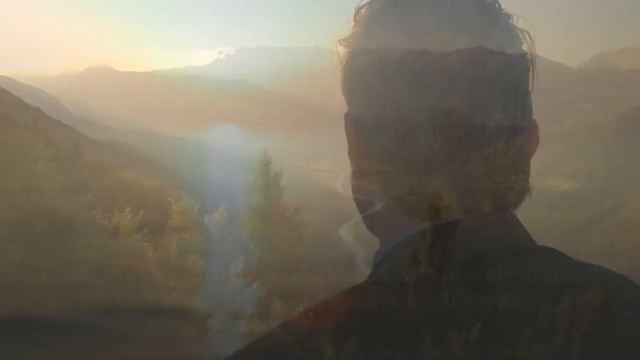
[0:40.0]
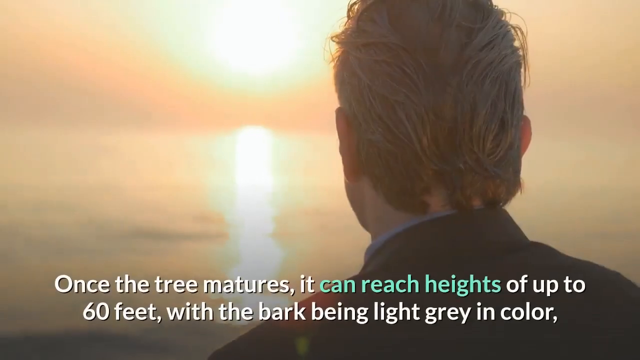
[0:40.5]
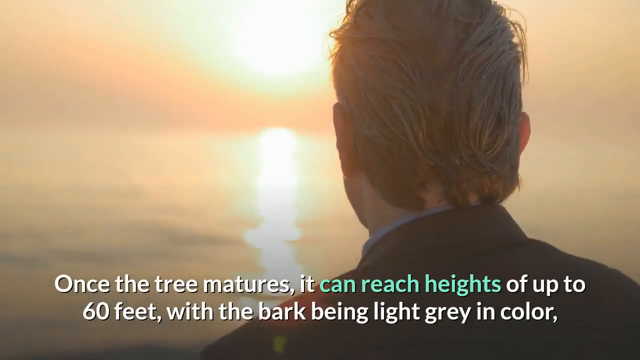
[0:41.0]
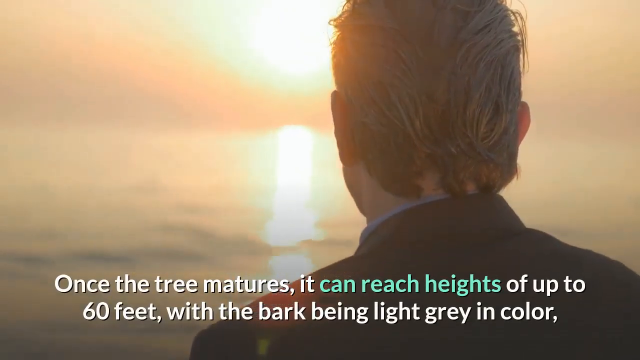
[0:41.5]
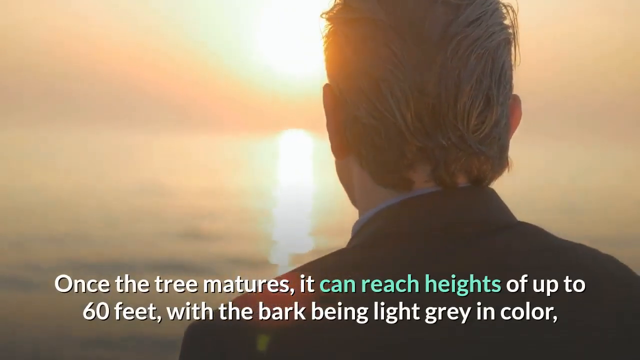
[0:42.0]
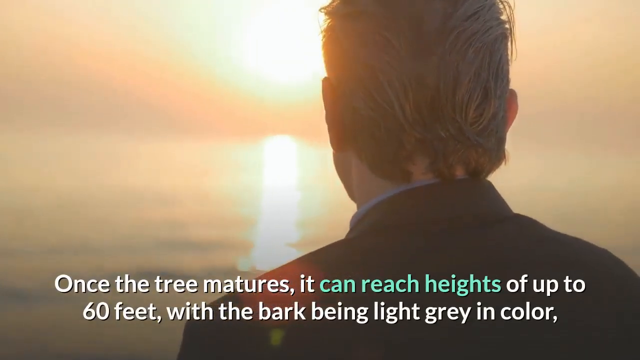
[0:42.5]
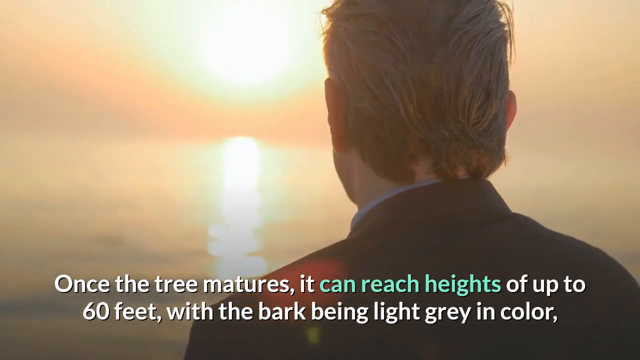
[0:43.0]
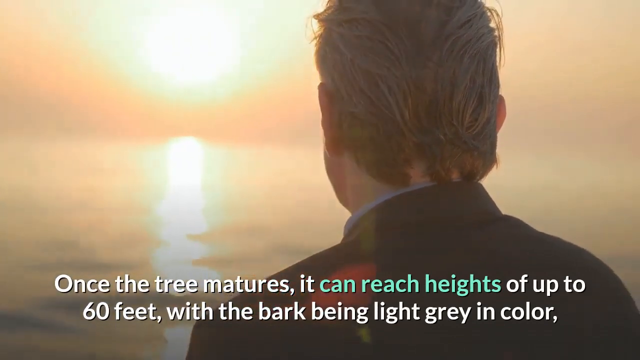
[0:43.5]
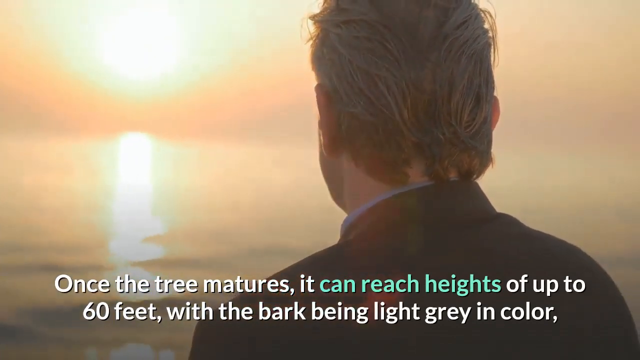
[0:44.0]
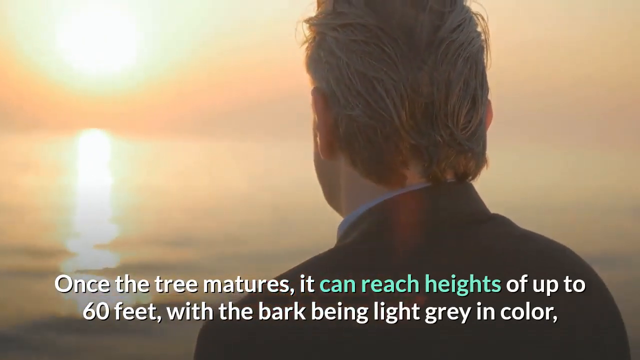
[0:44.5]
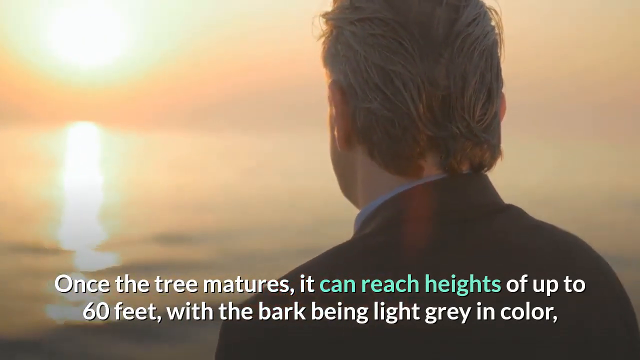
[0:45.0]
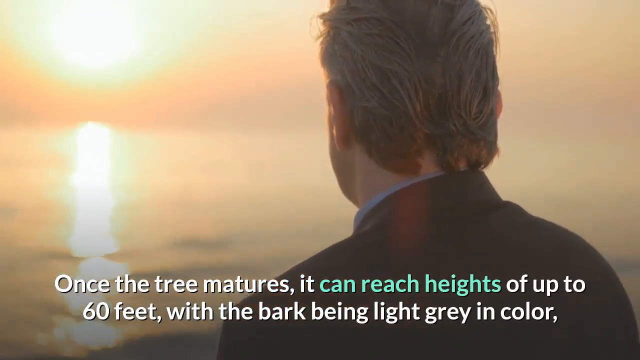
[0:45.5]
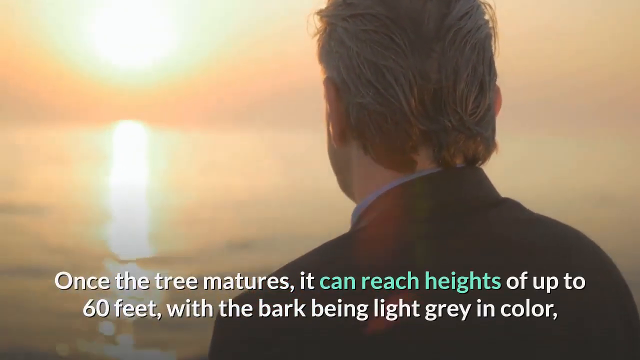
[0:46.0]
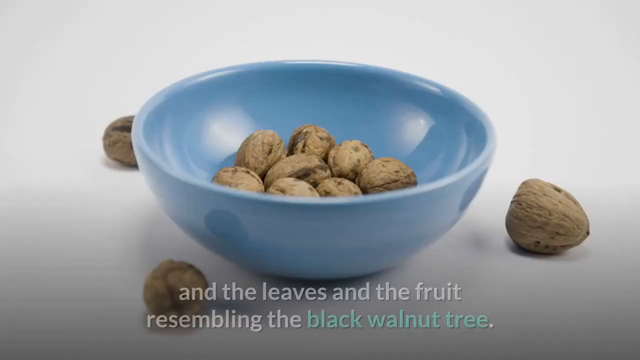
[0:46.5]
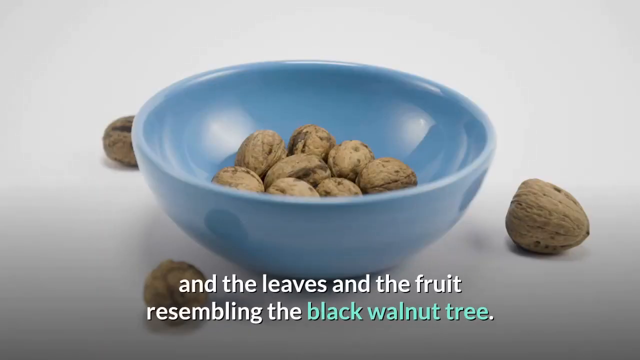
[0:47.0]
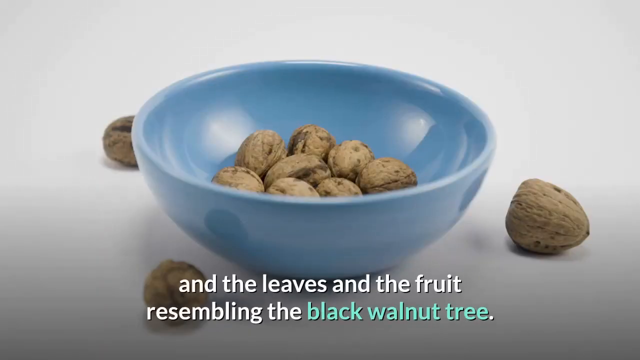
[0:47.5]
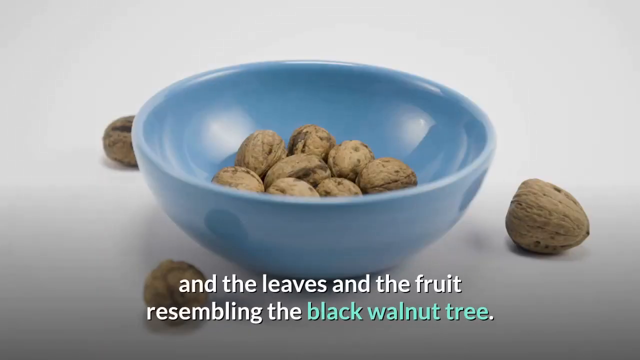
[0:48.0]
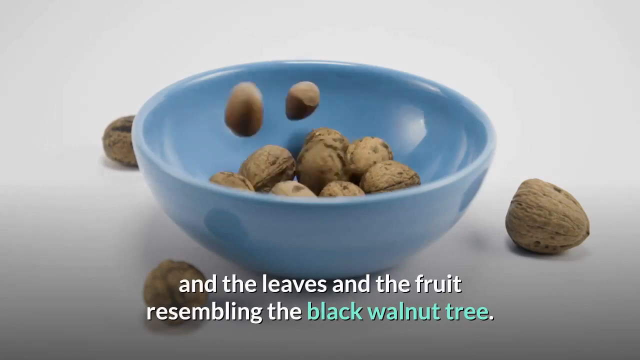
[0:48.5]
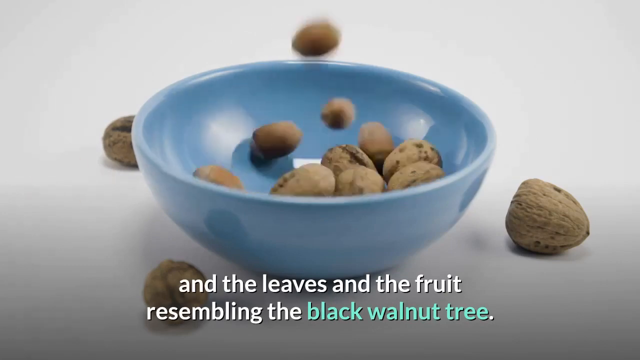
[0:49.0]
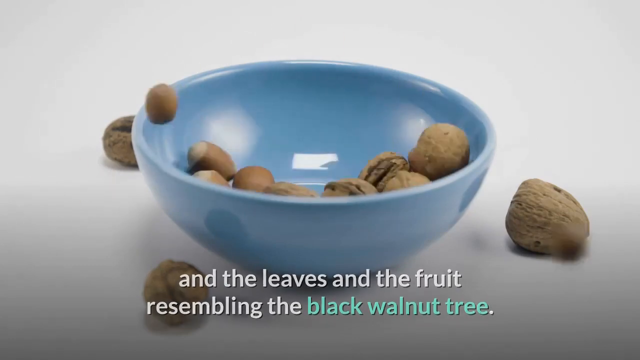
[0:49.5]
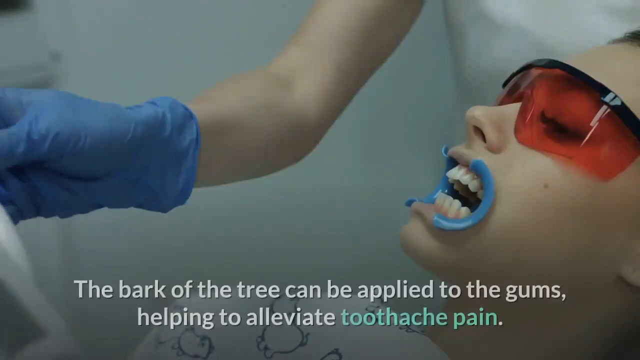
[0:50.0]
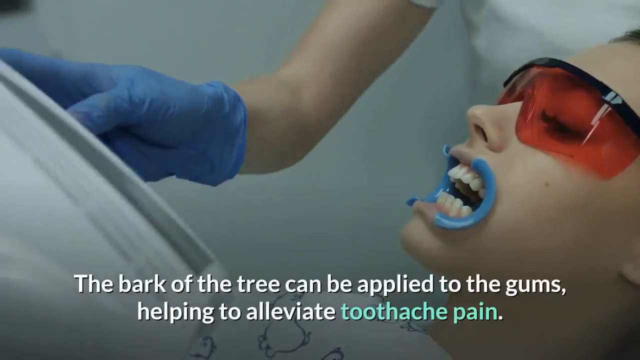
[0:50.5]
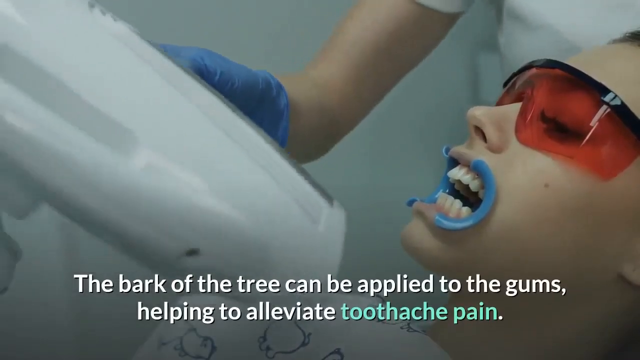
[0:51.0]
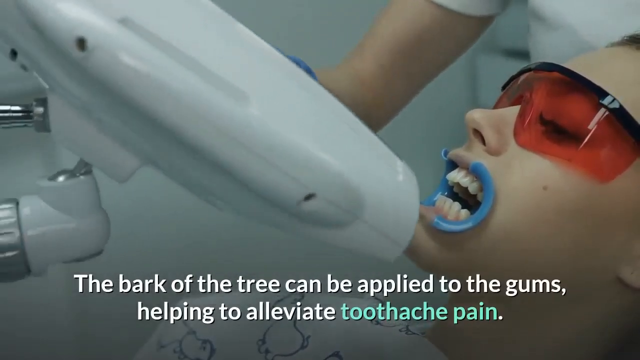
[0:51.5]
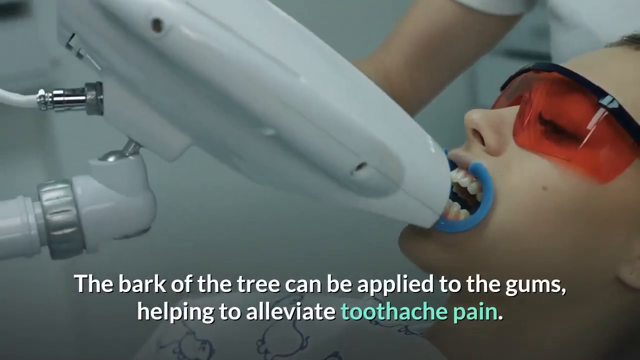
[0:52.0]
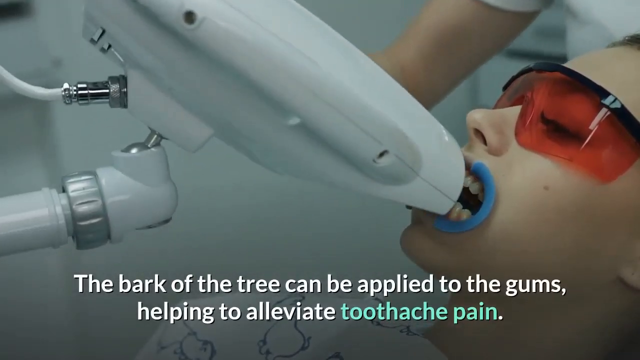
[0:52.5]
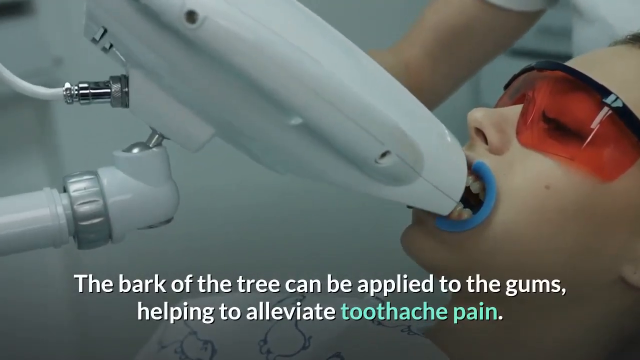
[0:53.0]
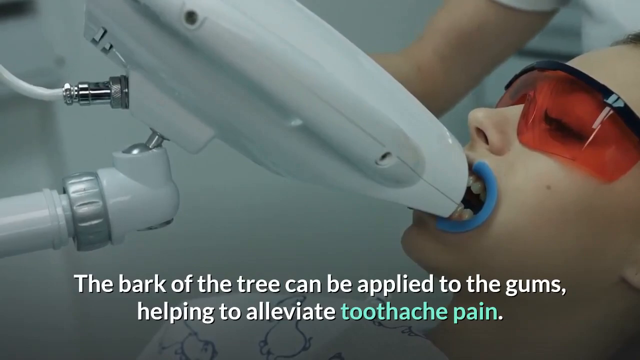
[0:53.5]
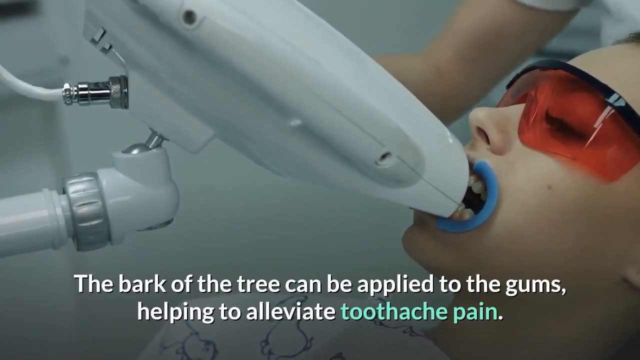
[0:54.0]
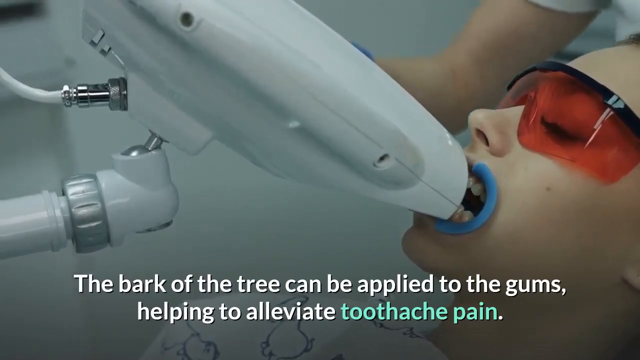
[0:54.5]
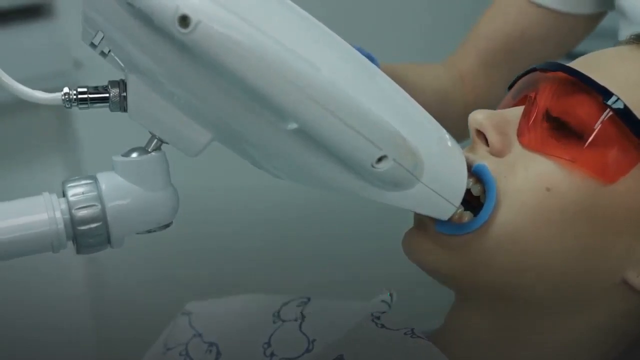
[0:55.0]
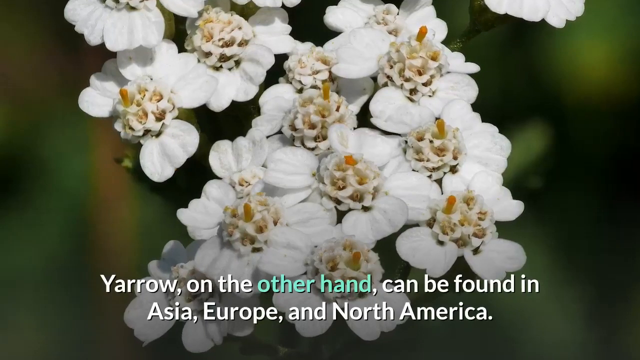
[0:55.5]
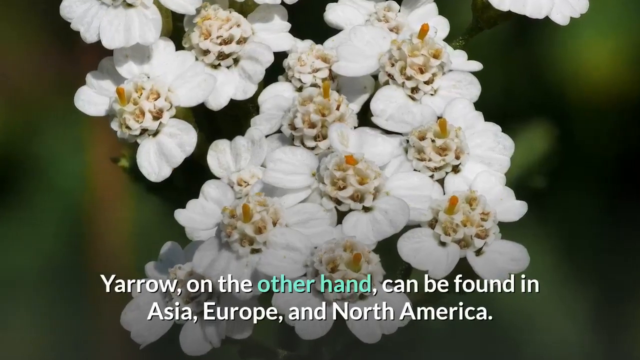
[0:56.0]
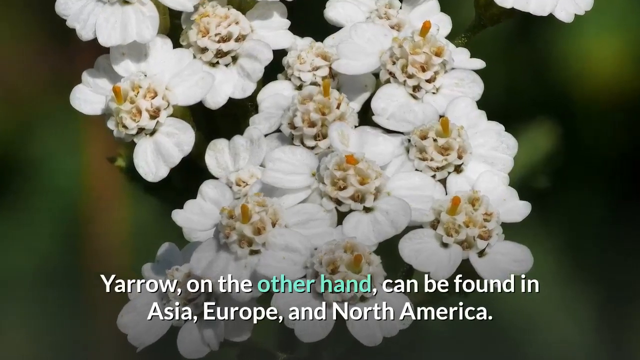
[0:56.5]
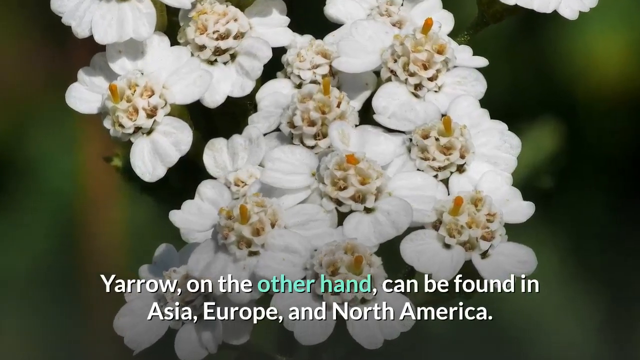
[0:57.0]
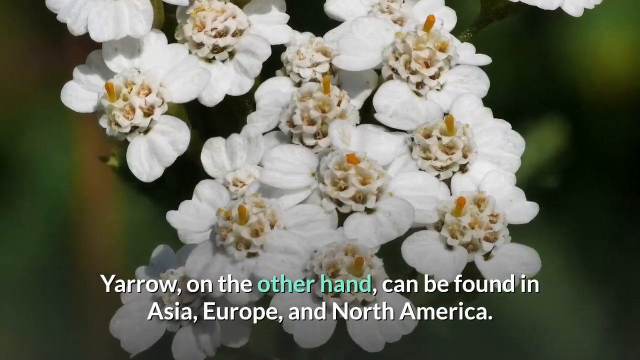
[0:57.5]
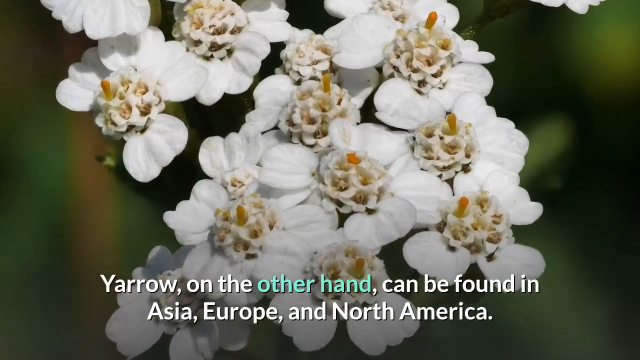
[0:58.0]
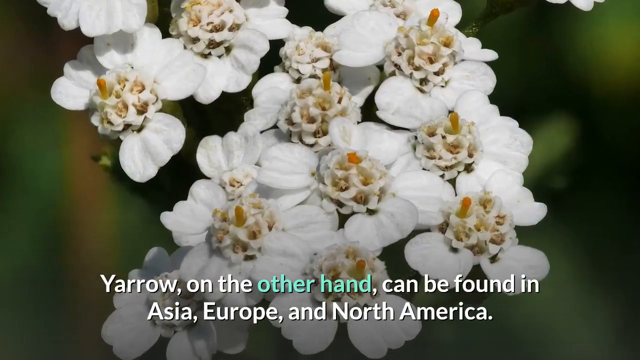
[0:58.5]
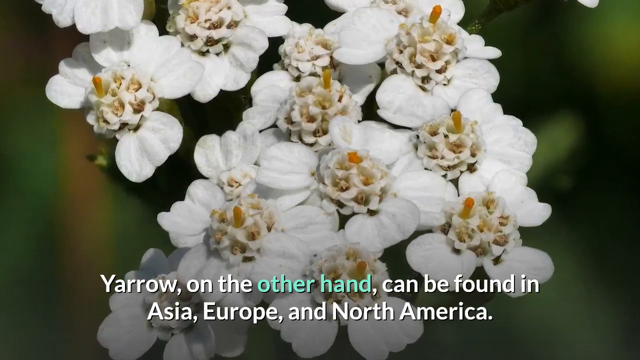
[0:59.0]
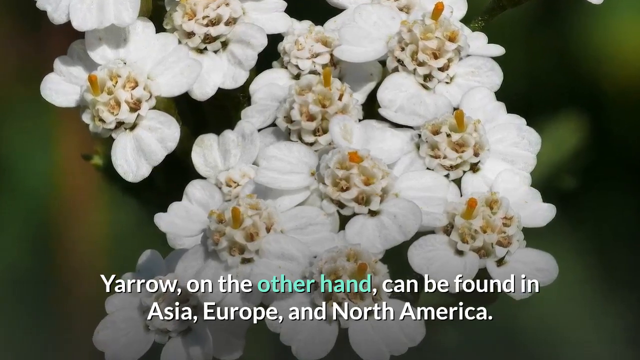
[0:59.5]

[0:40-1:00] The image of mountains and trees fades to the back of a man's head. He has short brown hair and wears a collared shirt with a jacket over it, and he faces a very bright yellow and orange sunset. There appears to be a body of water in front of the sunset, with a bright streak across its surface. The text at the bottom reads "once the tree matures, it can reach heights of up to 60 feet, with the bark being light gray in color." The camera moves back and forth, and the scene changes to a white surface with a blue bowl holding eight walnuts. Single walnuts are on the surface in the upper left area, the bottom left area and to the right side. The text underneath reads "and the leaves and the fruit resembling the black walnut tree." Hazelnuts then pour down on top of the walnuts in the bowl. The scene changes to a woman in a dentist chair with a blue apparatus holding her mouth open so her teeth are bared; she wears red sunglasses. To her right, a dental professional in a white shirt and a blue glove stands over her as if showing her something. The text reads "The bark of the tree can be applied to the gums, helping to alleviate toothache pain." A dental x-ray device is moved in front of her mouth. Next is an image of white flowers with the text "Yarrow, on the other hand, can be found in Asia, Europe, and North America."